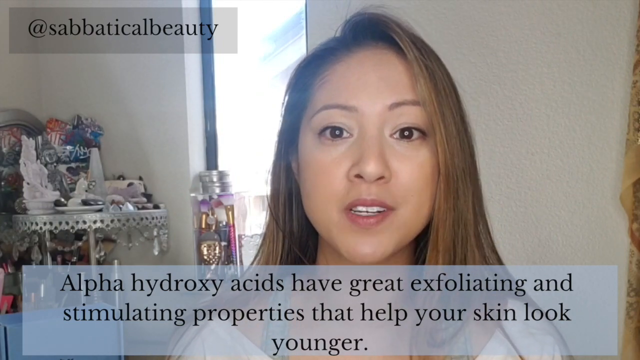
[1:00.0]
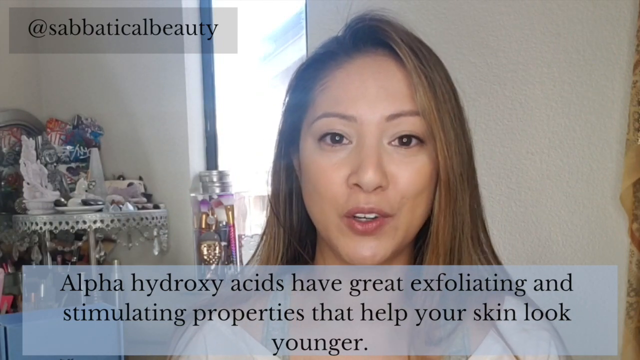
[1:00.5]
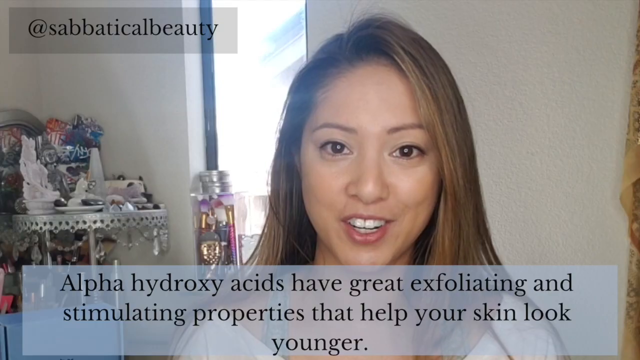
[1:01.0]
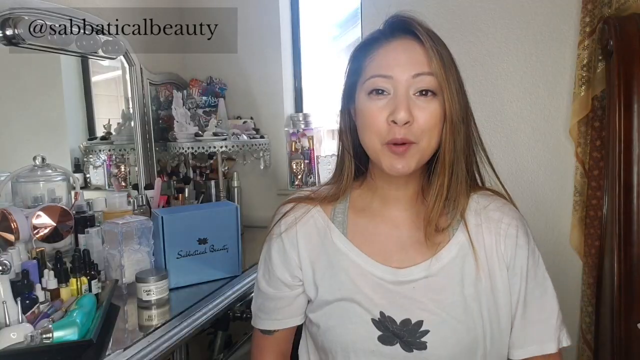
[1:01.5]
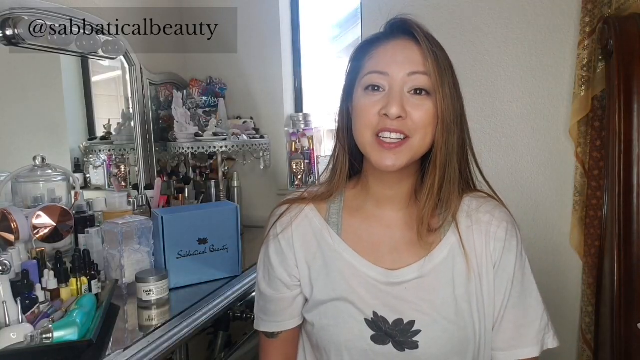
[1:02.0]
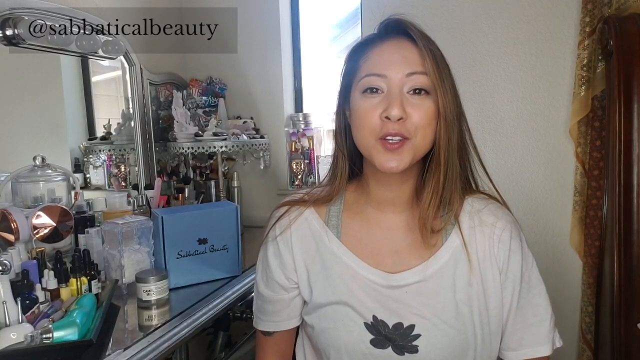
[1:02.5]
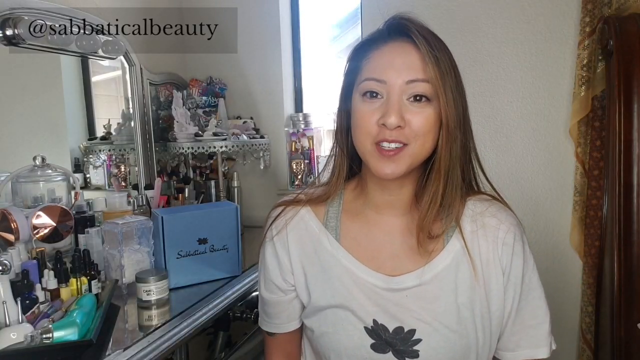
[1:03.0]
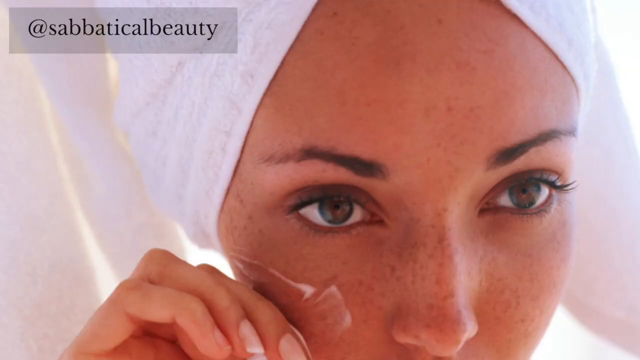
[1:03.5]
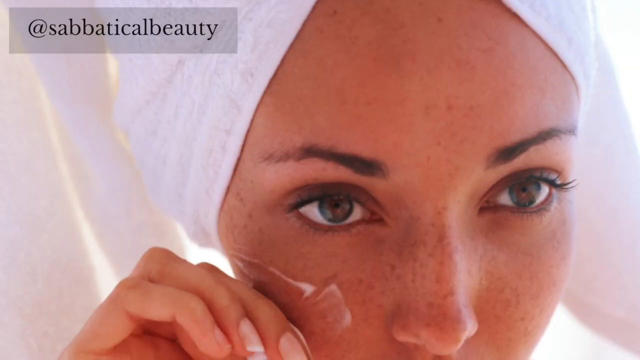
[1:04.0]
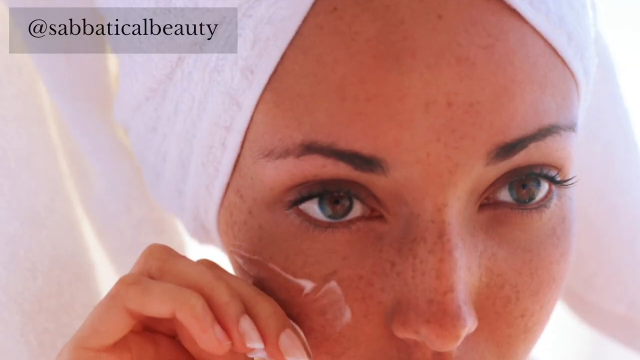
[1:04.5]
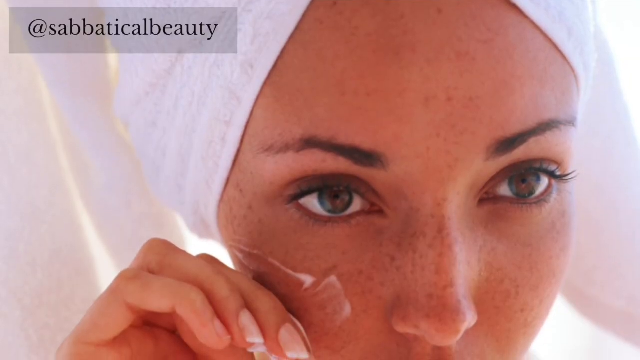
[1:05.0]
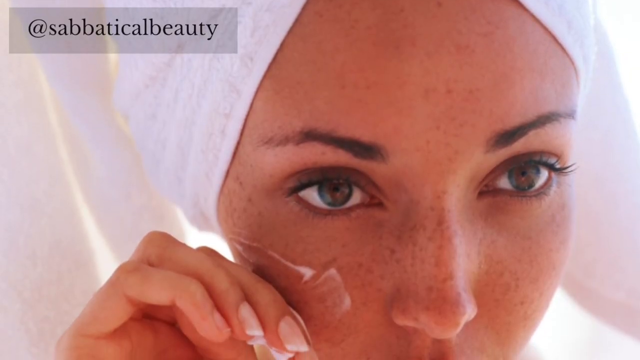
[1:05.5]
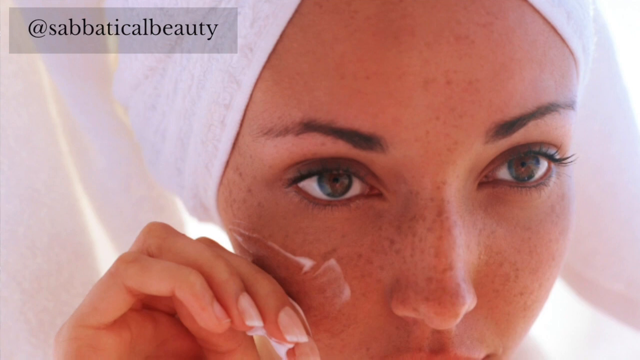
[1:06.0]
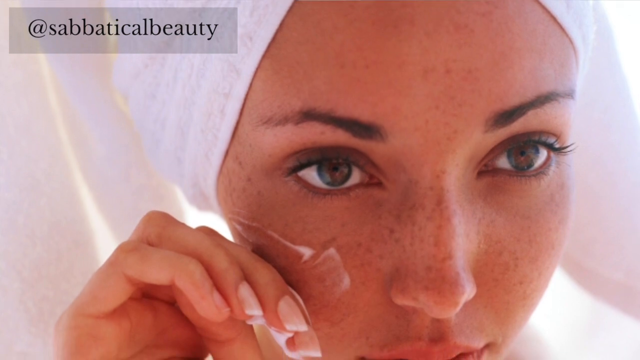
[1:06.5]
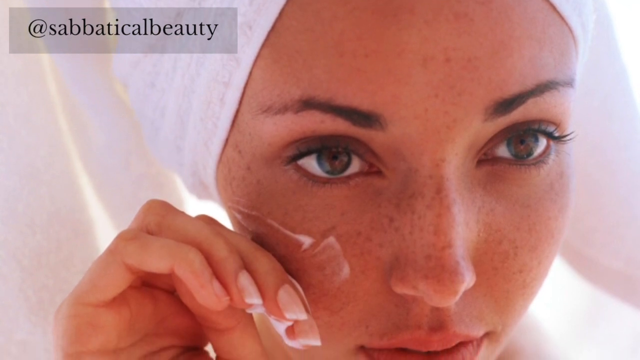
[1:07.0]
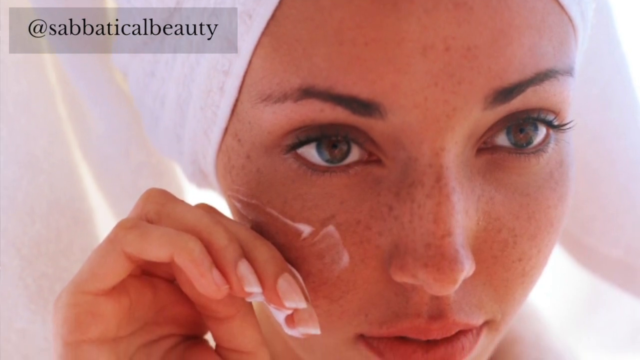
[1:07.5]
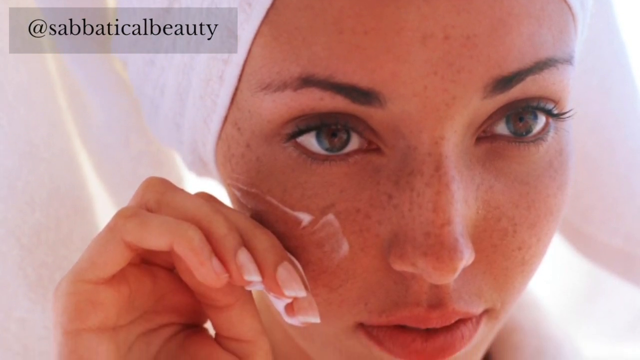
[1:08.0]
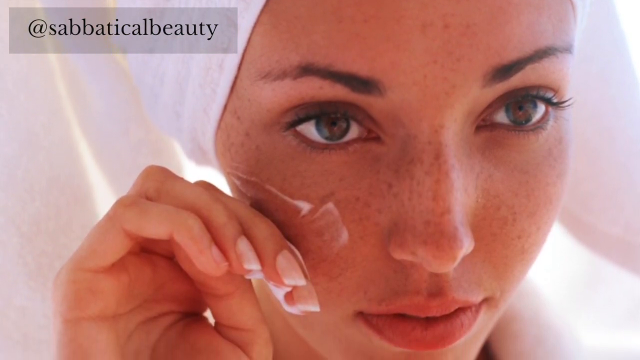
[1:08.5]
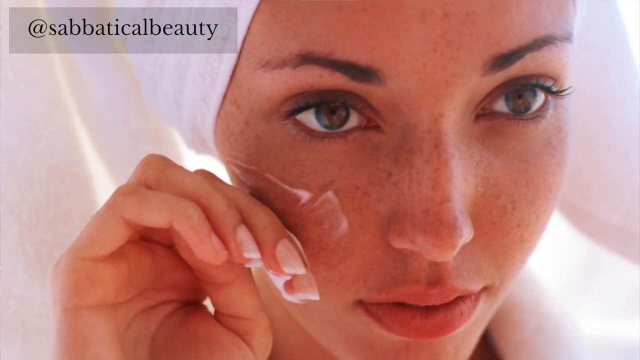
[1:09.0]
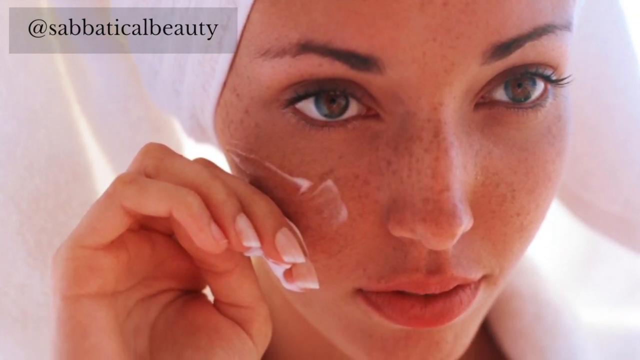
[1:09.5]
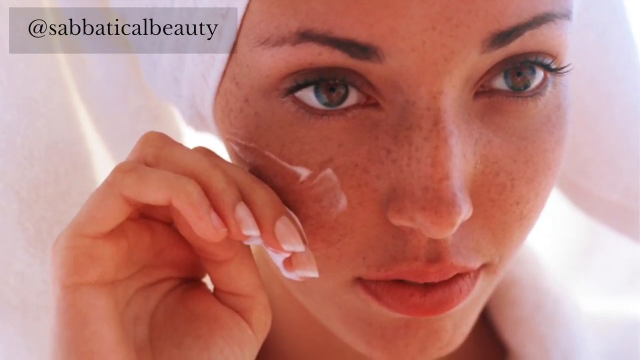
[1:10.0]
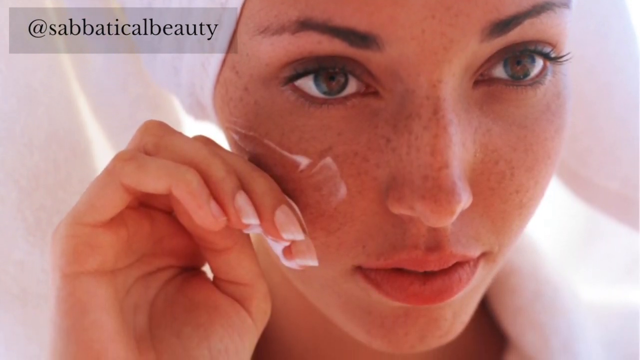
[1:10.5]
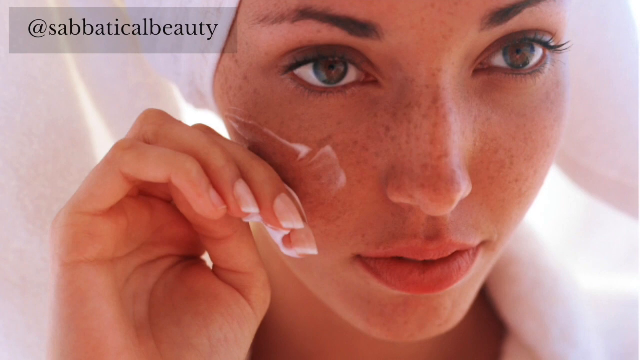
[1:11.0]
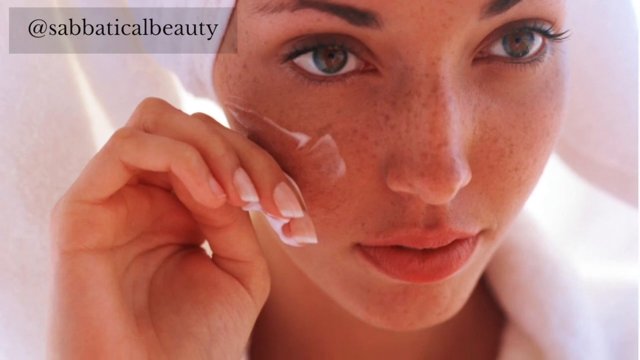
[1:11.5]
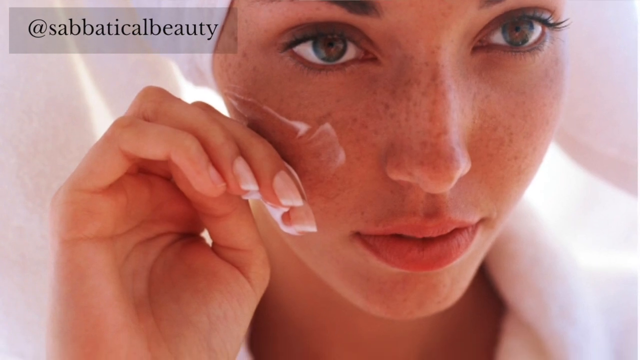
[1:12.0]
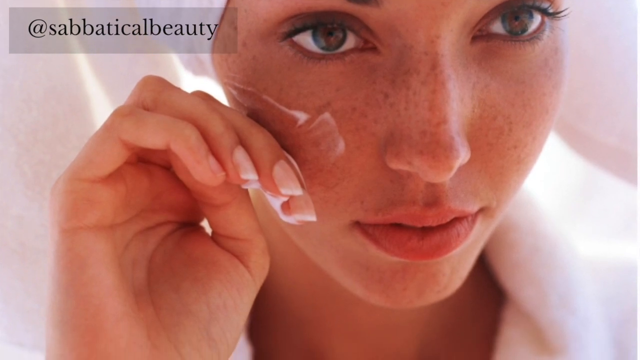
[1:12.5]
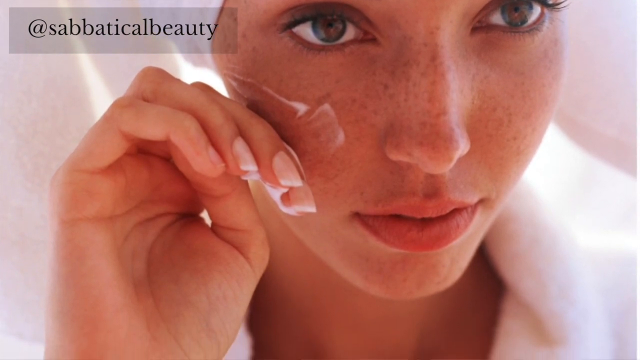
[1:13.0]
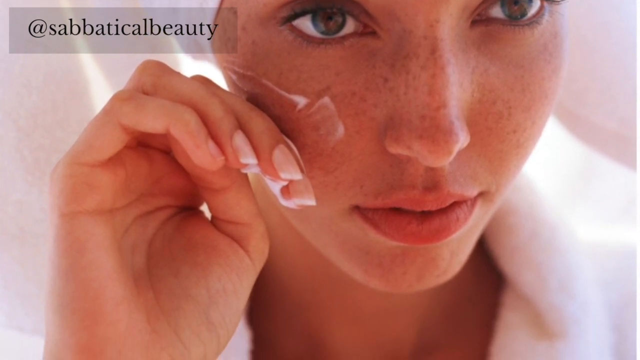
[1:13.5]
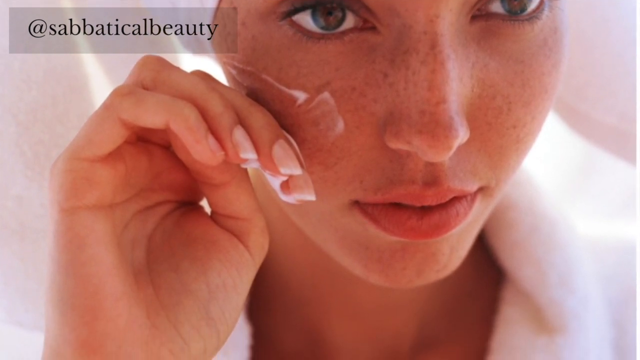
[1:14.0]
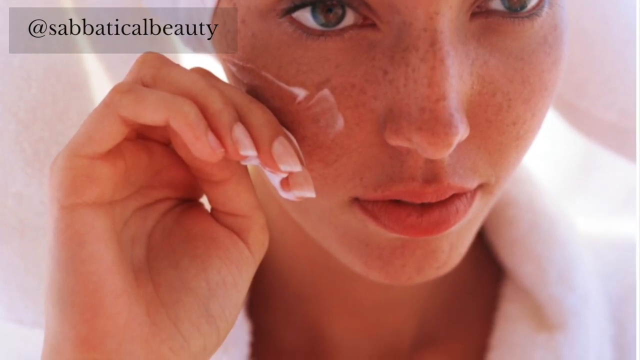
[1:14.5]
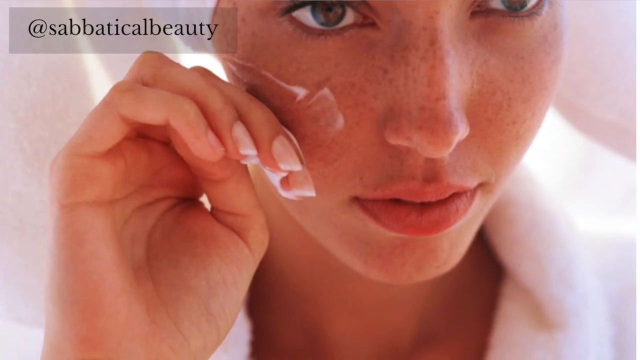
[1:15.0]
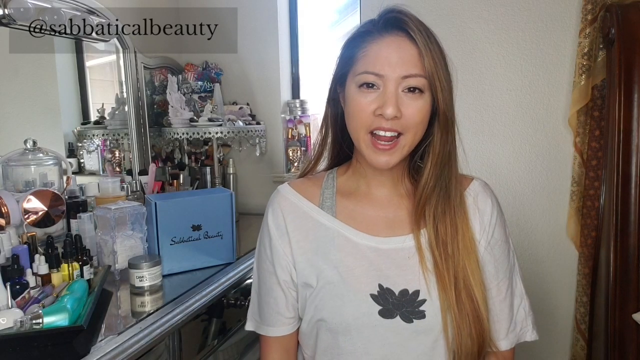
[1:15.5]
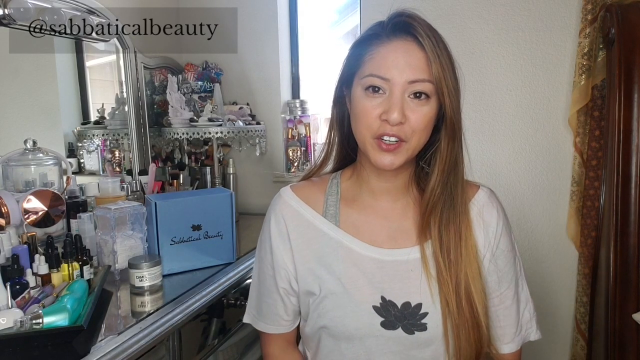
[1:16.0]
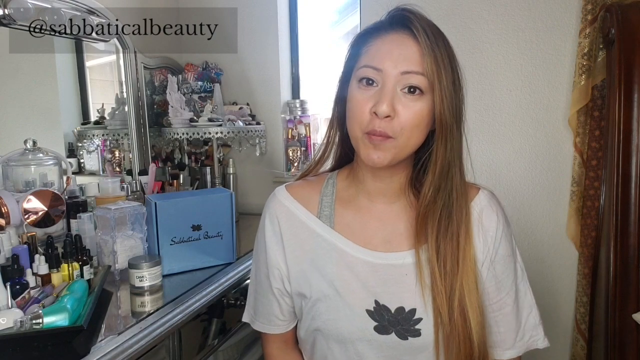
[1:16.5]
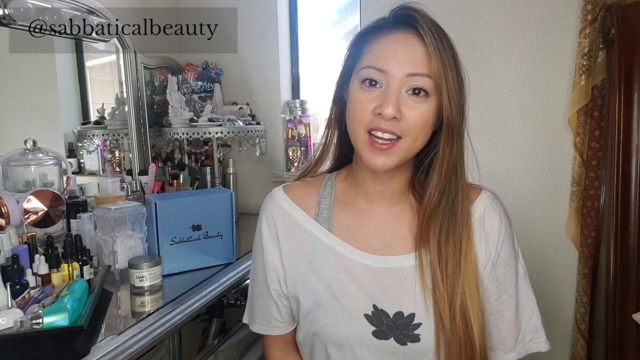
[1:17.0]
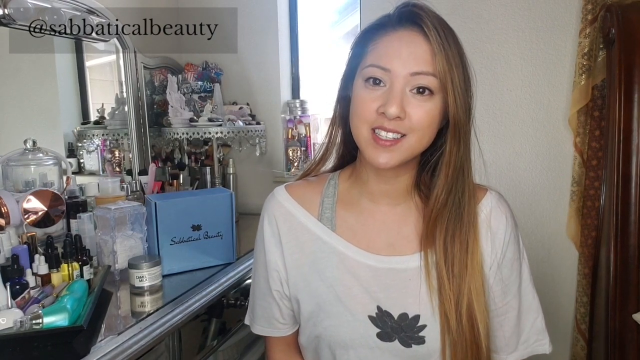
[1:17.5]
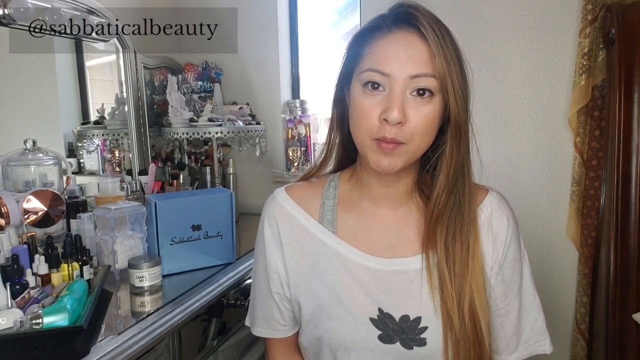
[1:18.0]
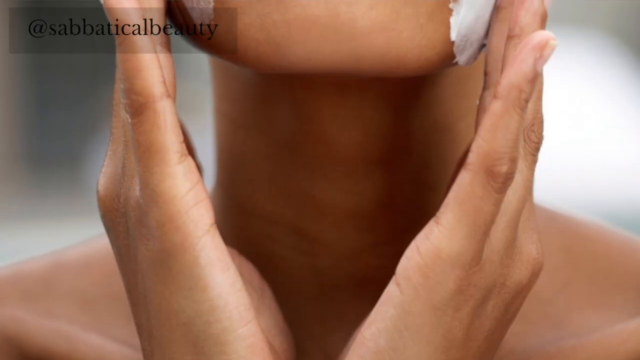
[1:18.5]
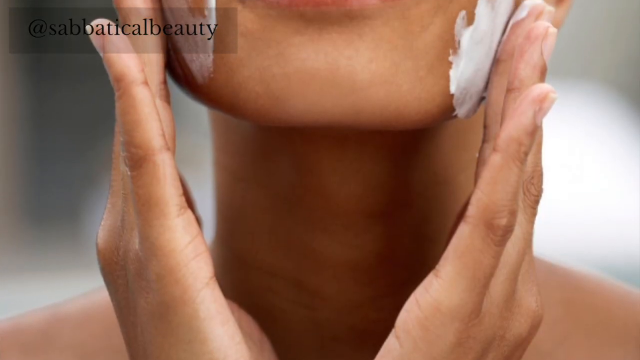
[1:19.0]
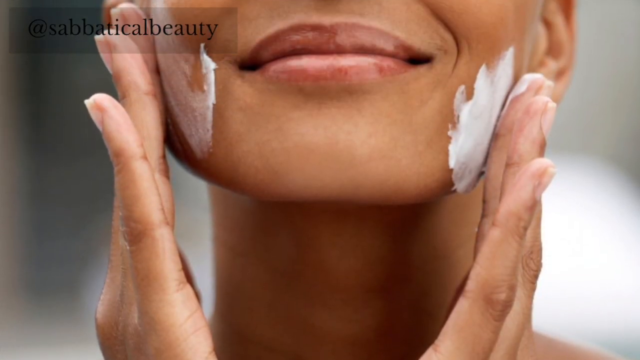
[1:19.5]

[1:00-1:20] A woman with a towel on her head applies the skincare product to her skin. She is white with brown eyes, and her skin is fairly flawless but has a black spot. The video then returns to the woman presenting the product.